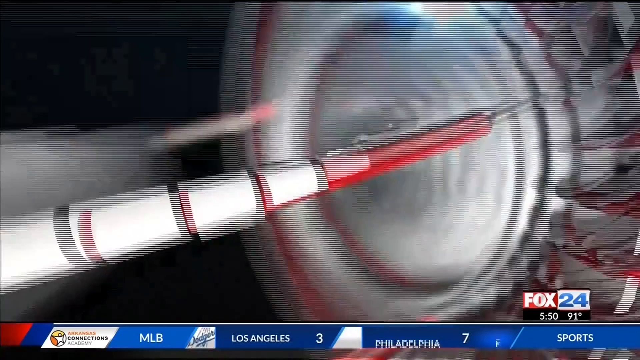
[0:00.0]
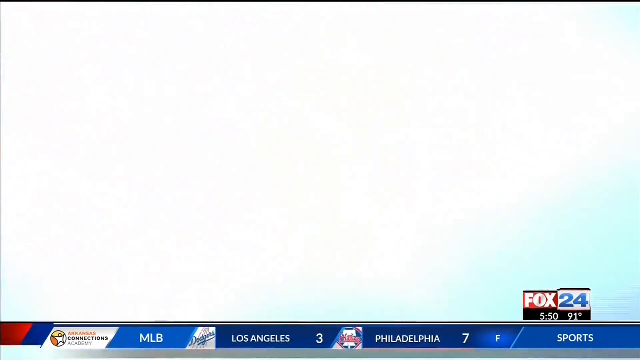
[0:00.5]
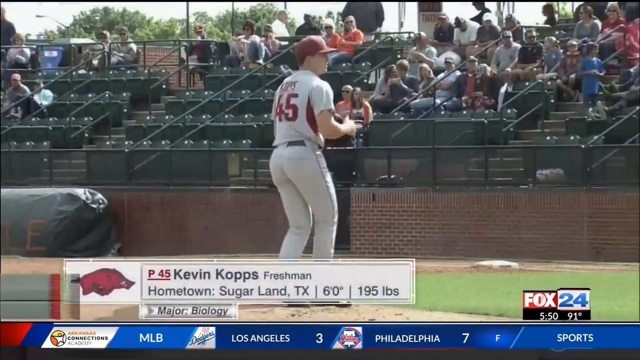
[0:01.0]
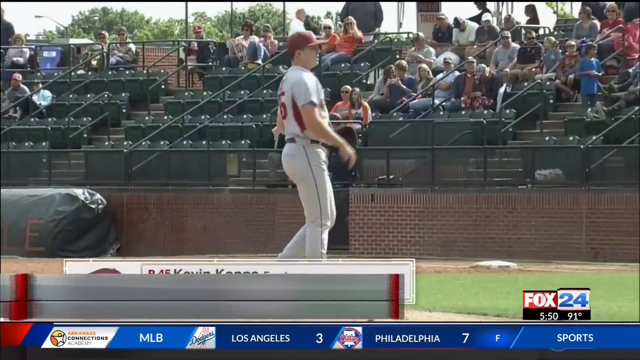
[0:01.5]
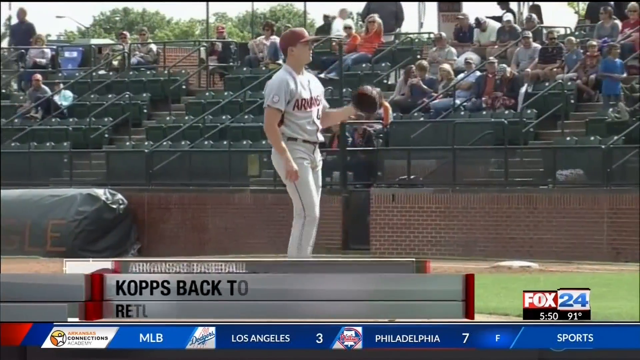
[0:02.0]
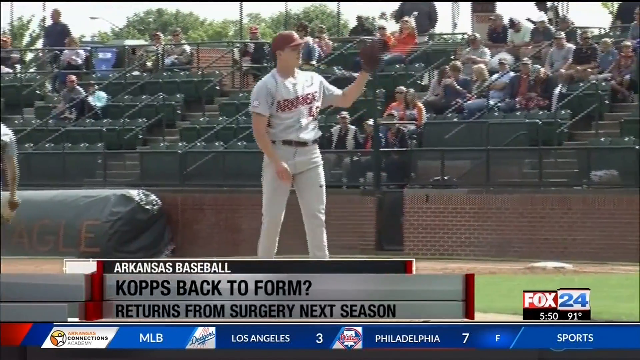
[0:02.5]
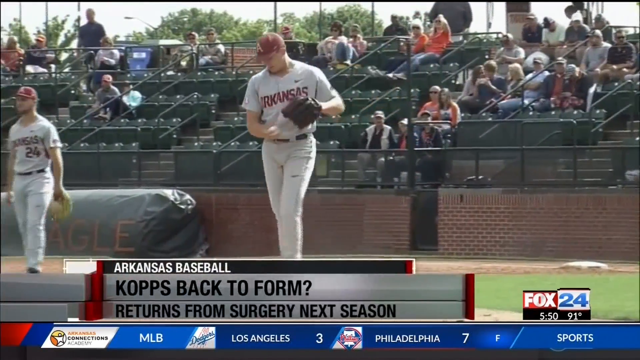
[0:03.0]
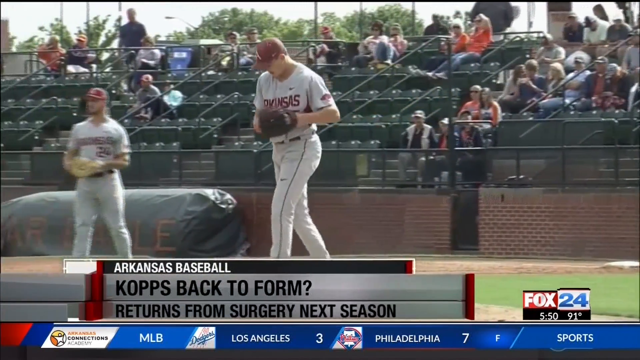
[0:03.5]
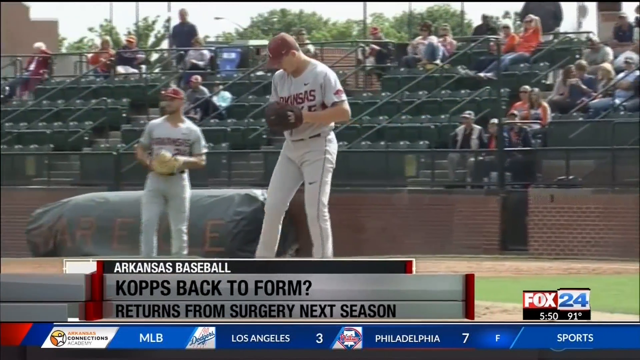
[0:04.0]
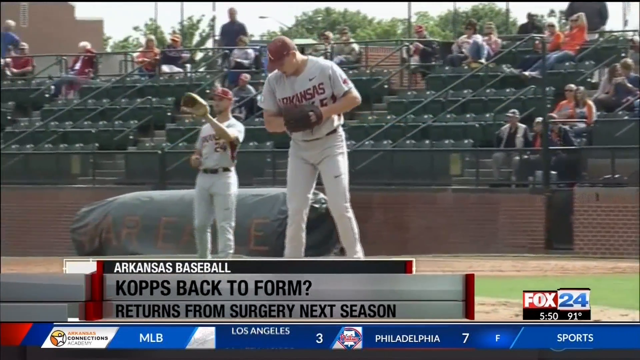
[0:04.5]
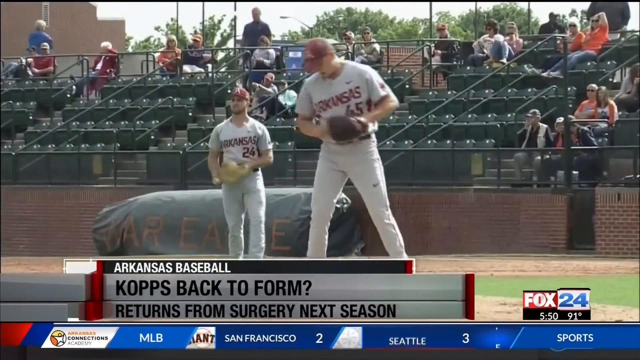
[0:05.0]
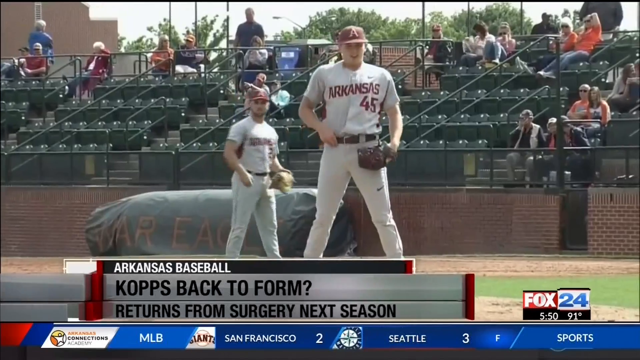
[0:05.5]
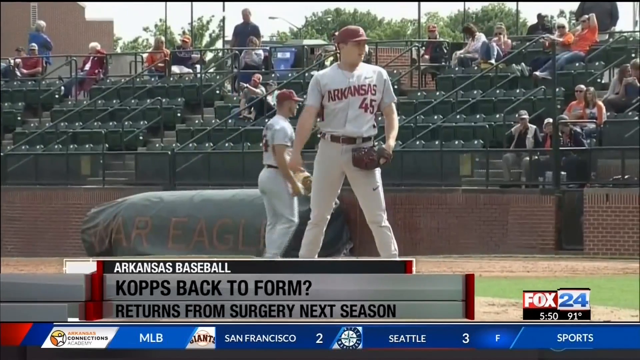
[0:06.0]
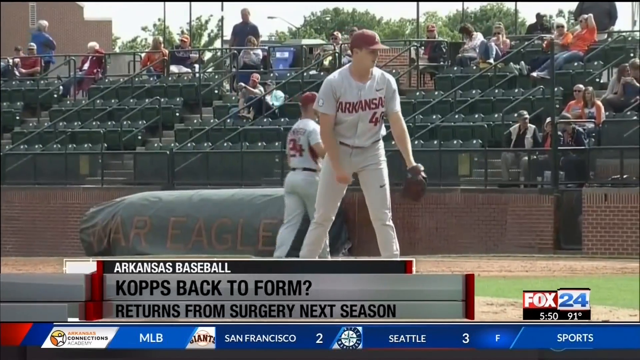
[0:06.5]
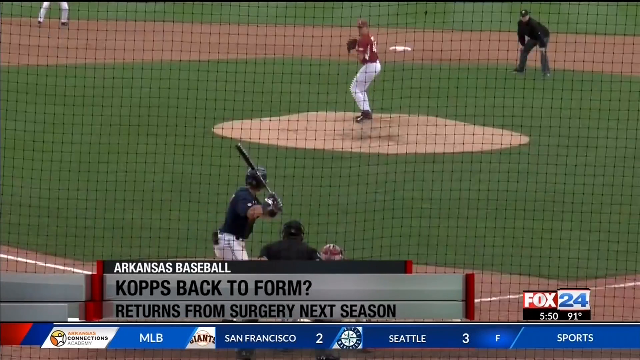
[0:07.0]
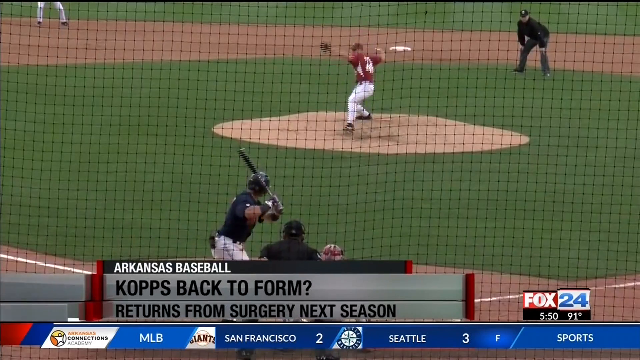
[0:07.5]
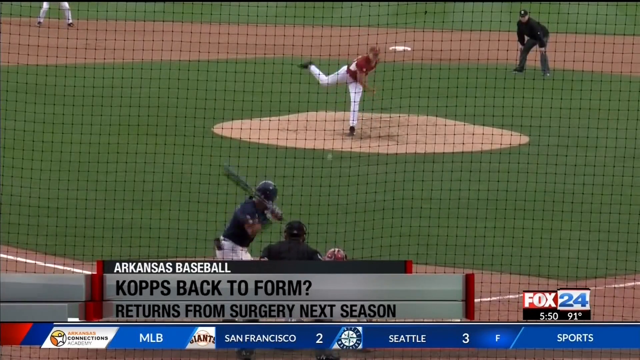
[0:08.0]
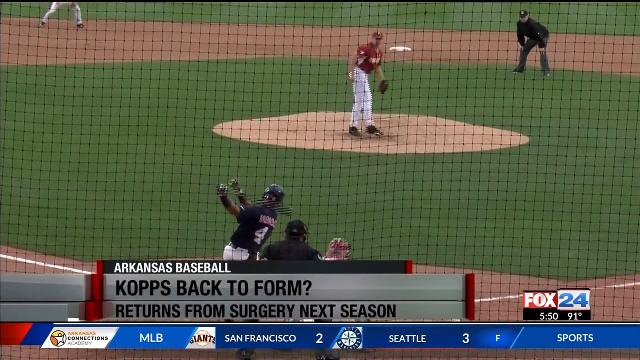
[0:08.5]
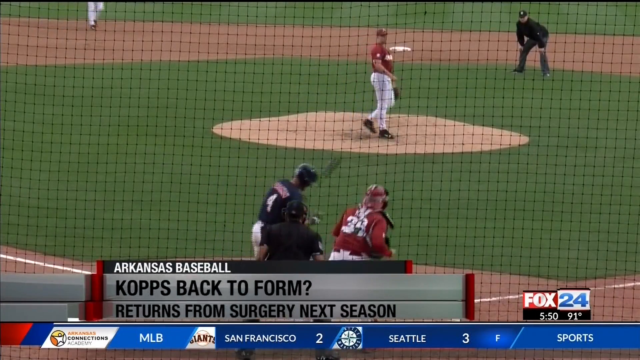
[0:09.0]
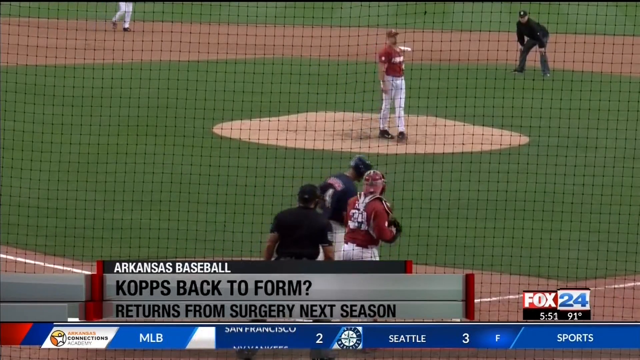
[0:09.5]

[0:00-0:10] Arkansas baseball content appears on screen with the text "Copps back to form?" and "Returns from surgery next season." A pitcher is shown: Kevin Copps, a freshman from Sugar Land, Texas, who is six feet tall, weighs 195 pounds, majors in biology and wears number 45. He looks like a right-handed pitcher. Then, apparently, he throws a pitch and the batter strikes out.